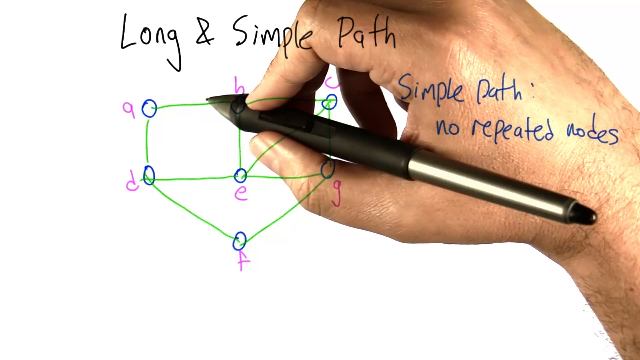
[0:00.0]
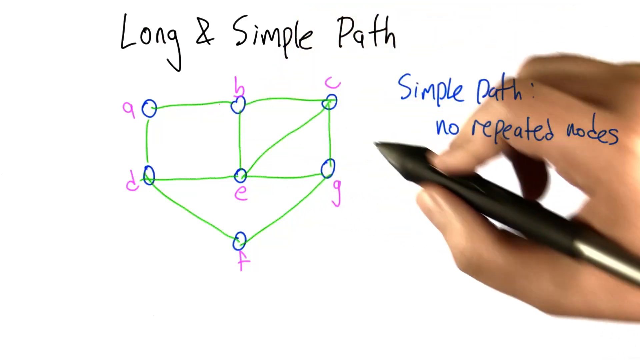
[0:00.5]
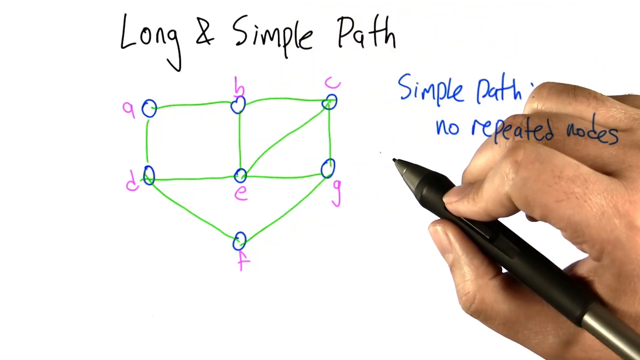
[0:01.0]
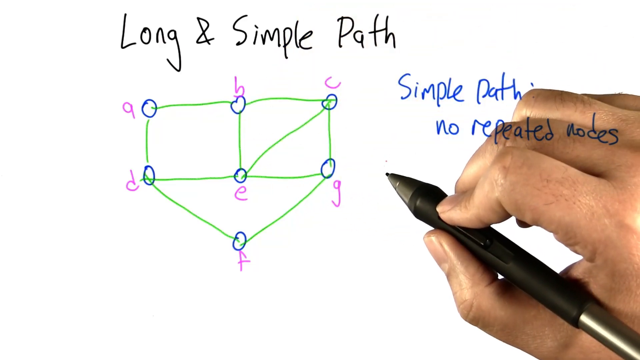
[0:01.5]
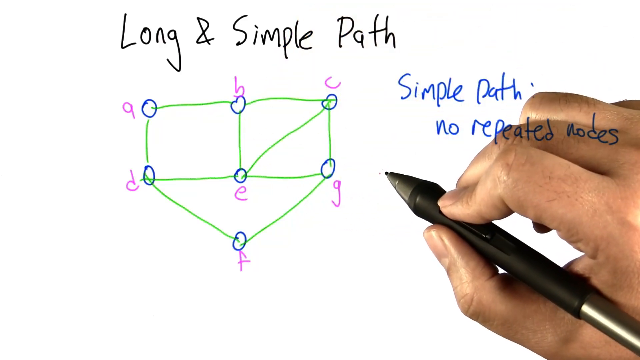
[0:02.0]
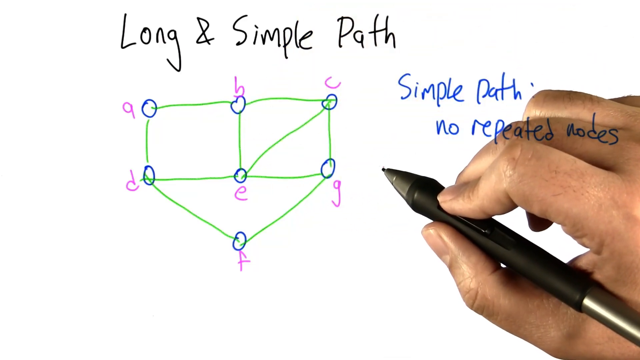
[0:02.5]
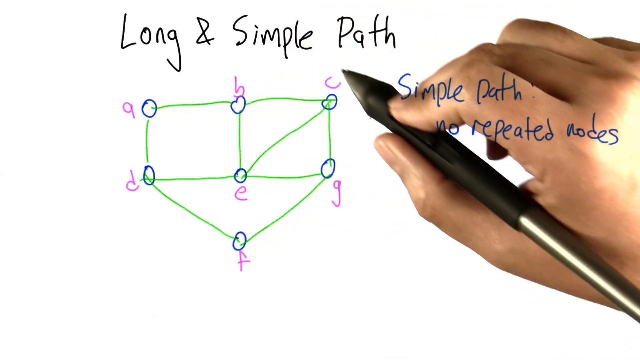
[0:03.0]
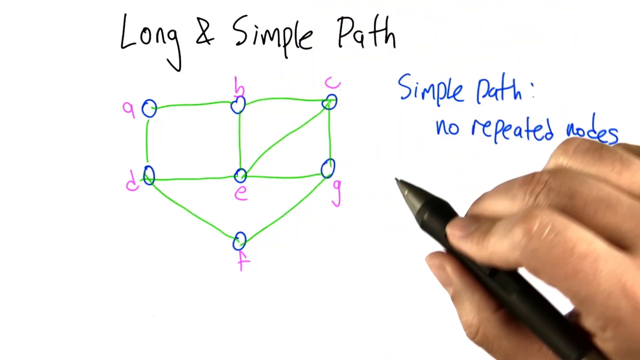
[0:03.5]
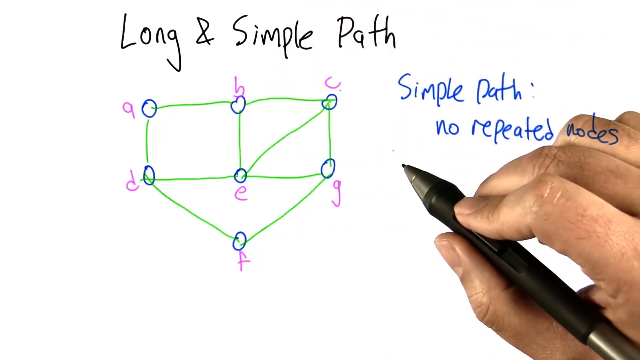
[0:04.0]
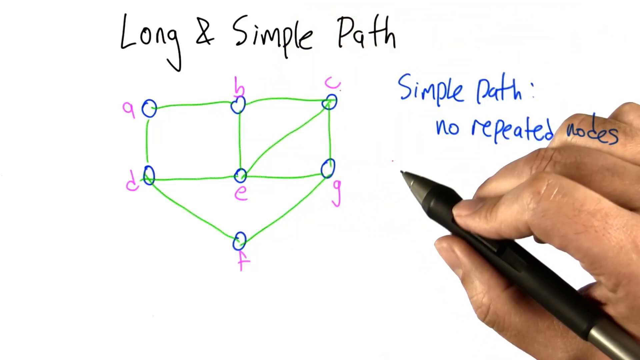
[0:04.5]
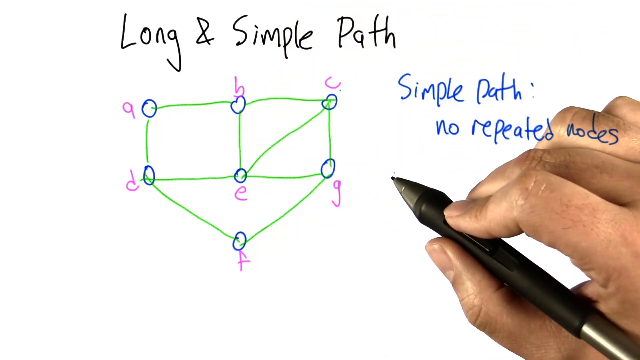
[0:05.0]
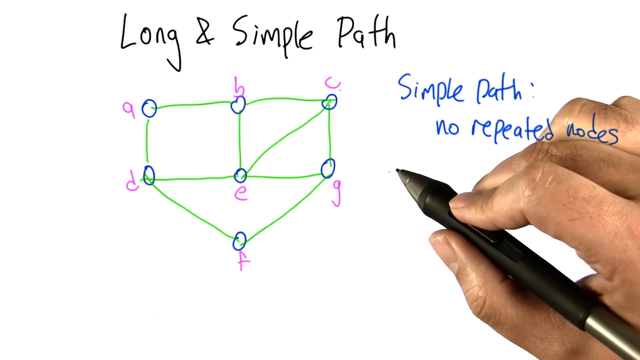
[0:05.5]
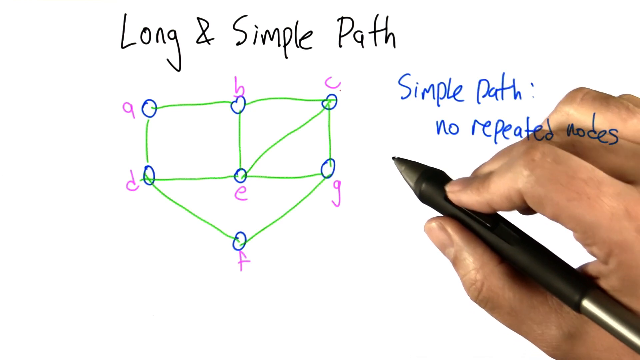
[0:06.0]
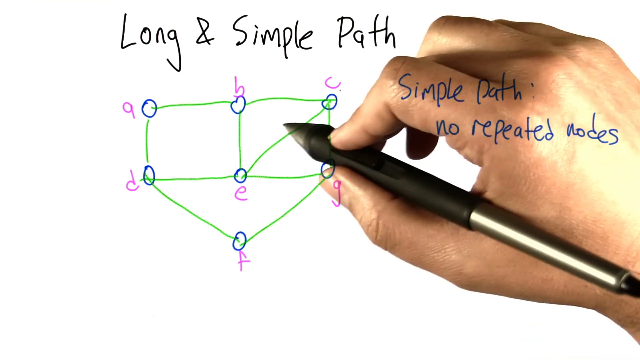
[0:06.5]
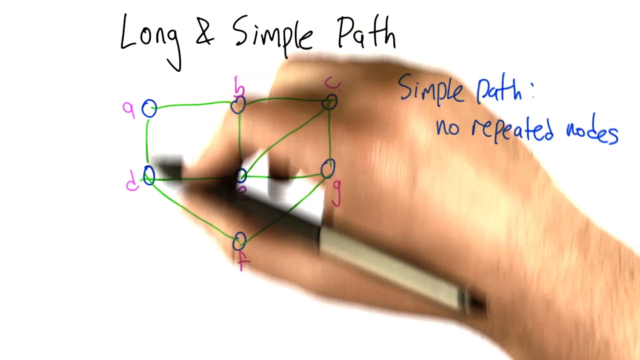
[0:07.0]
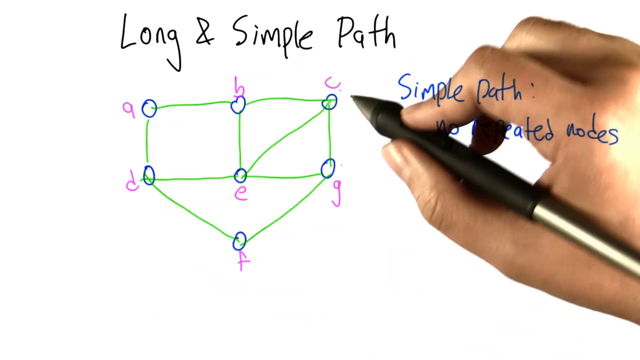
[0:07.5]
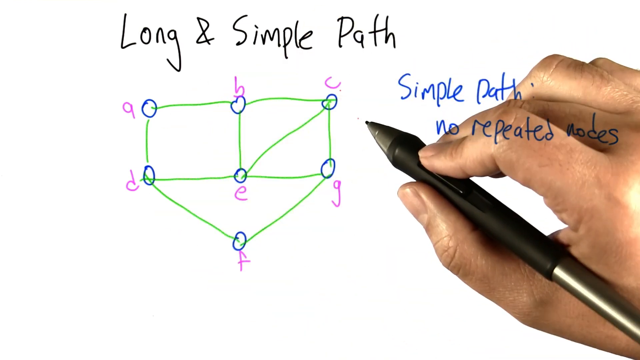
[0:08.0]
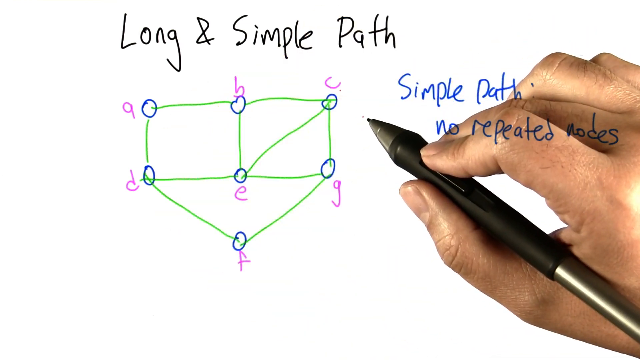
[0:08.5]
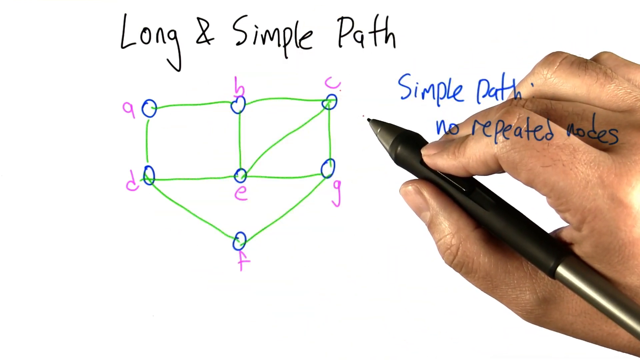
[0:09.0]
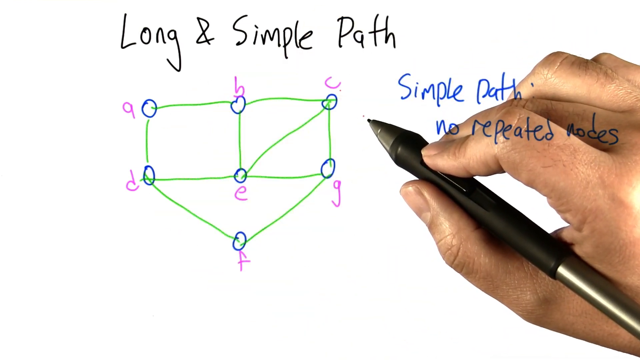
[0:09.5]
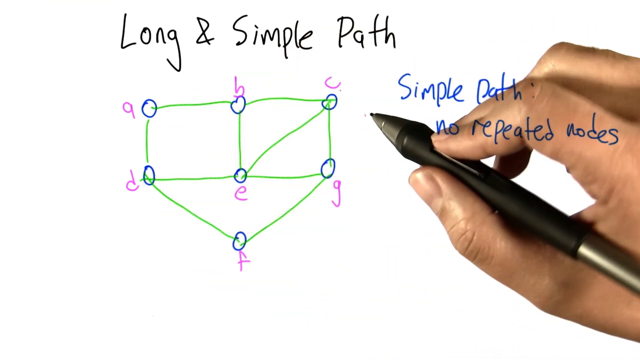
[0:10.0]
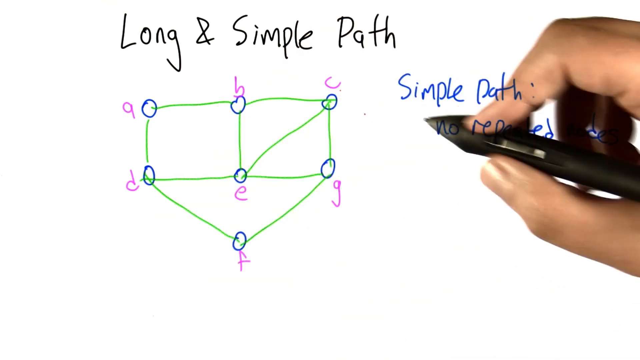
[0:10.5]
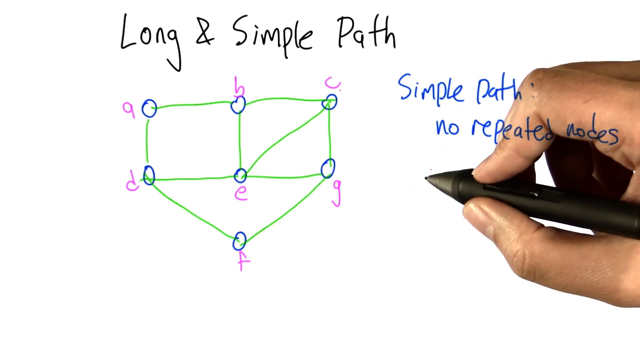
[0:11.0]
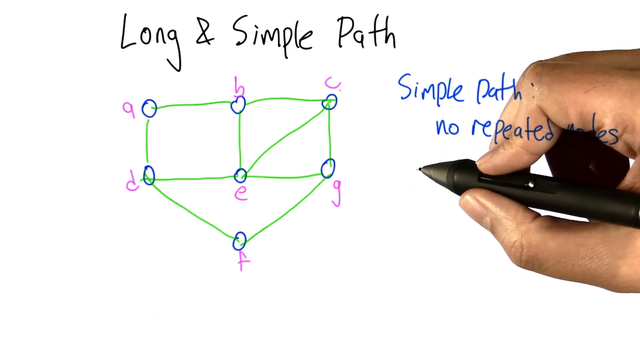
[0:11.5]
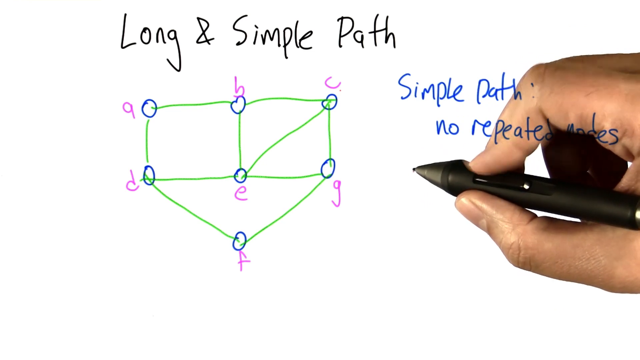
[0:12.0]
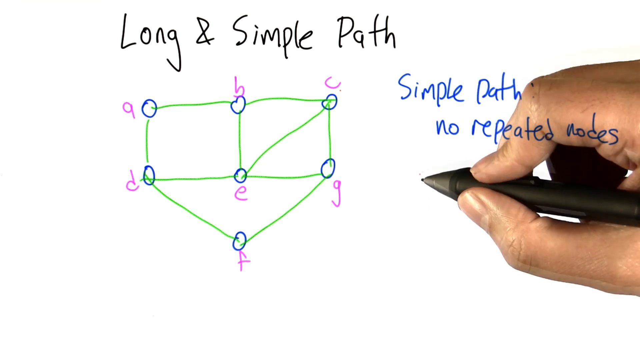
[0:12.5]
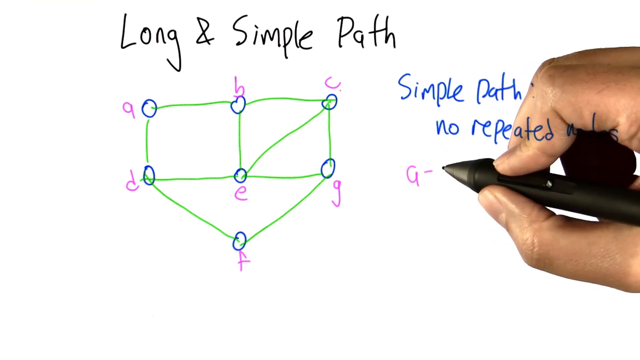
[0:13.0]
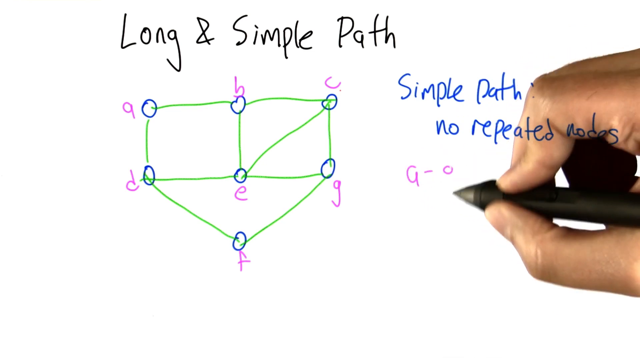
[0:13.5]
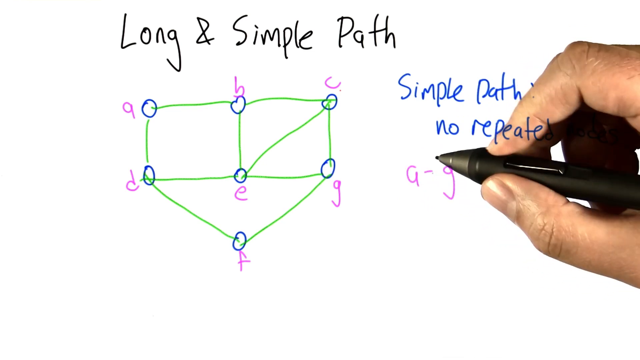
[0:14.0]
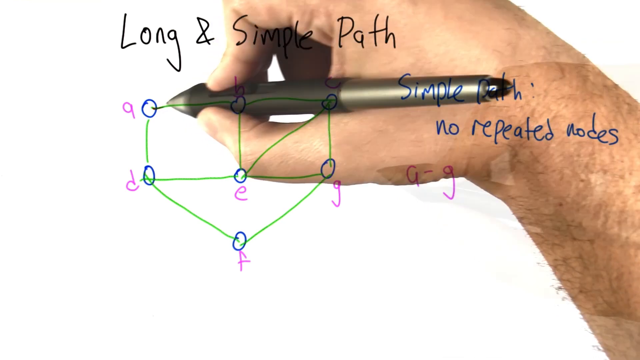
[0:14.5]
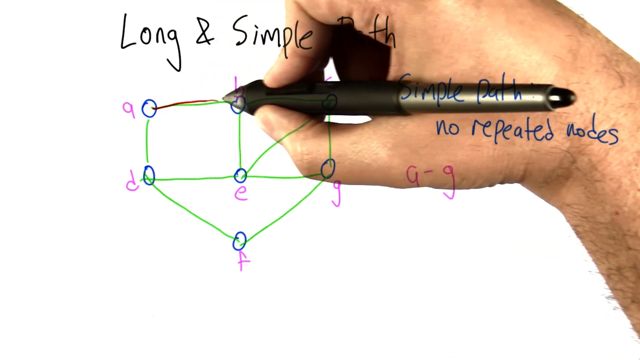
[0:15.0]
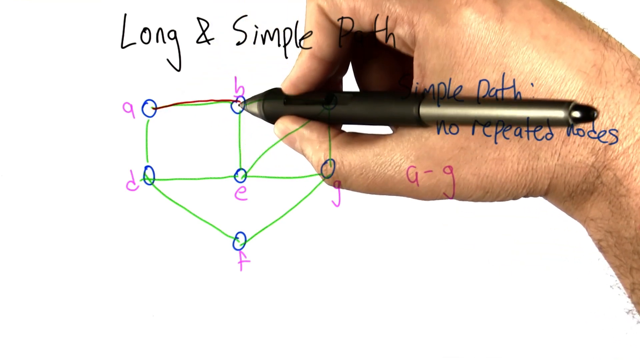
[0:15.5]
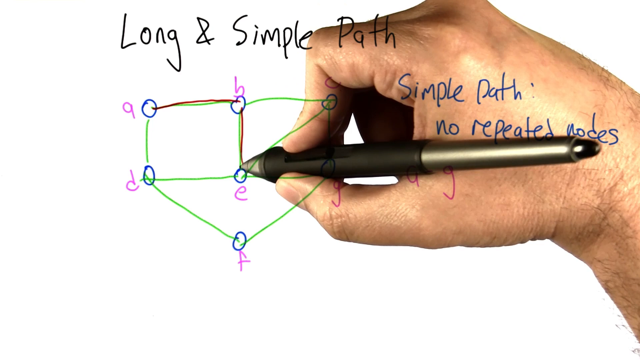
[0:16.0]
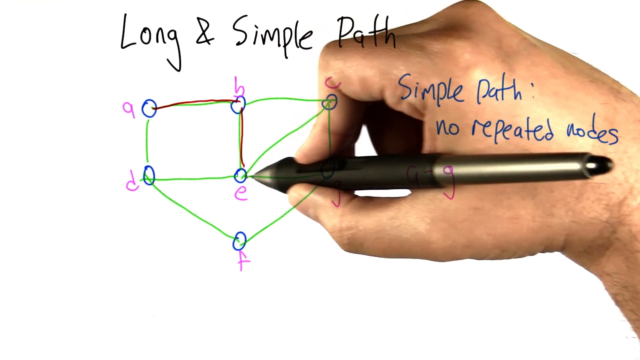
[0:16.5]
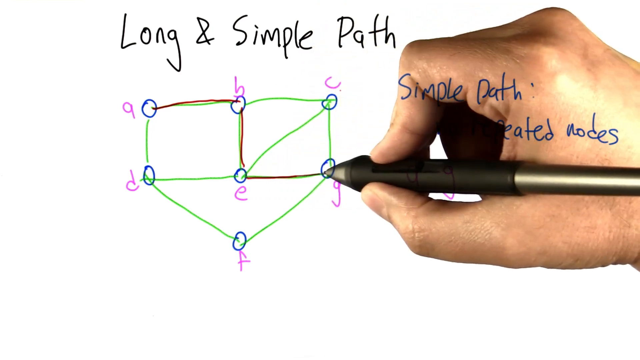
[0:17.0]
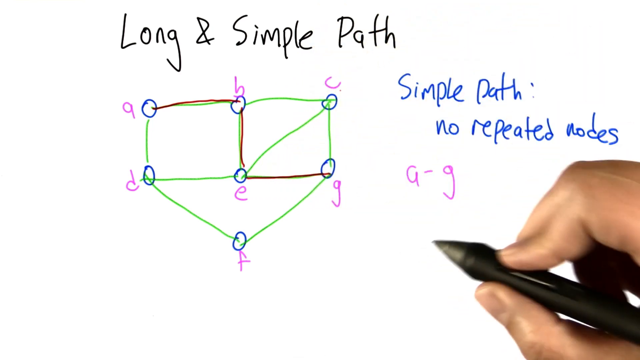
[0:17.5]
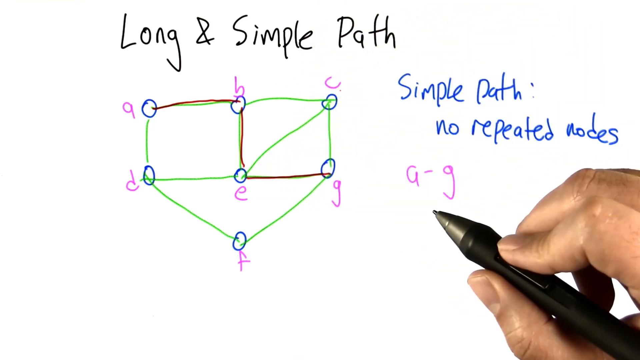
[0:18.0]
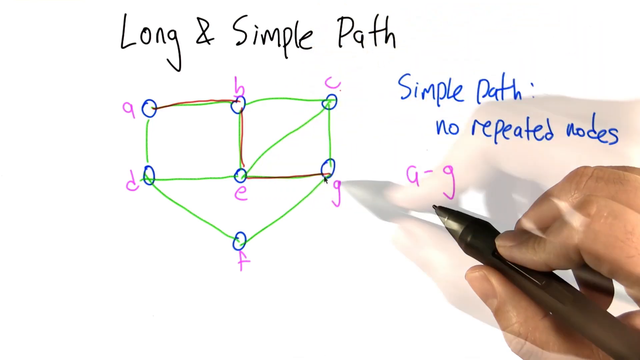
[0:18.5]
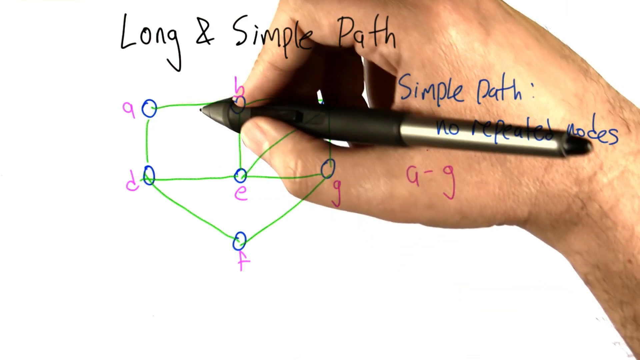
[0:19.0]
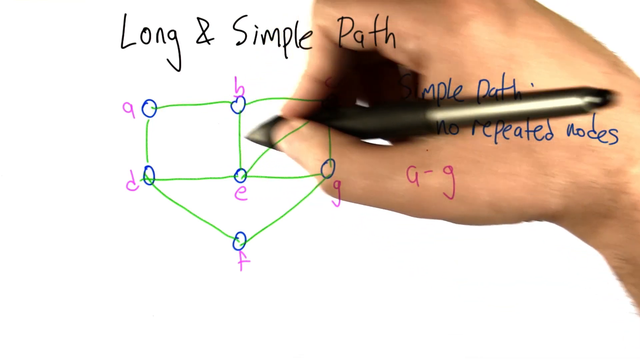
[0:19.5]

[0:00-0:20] A human hand appears over a diagram. The words "simple path" and "no repeated" are on the paper, along with 0, 9 and the letters A, B, C, G, E and F. The hand, a woman's, writes on the diagram and draws lines between letters such as E and G. No full person is visible, only the hand; no clothes can be seen, and the only activity is the hand writing.